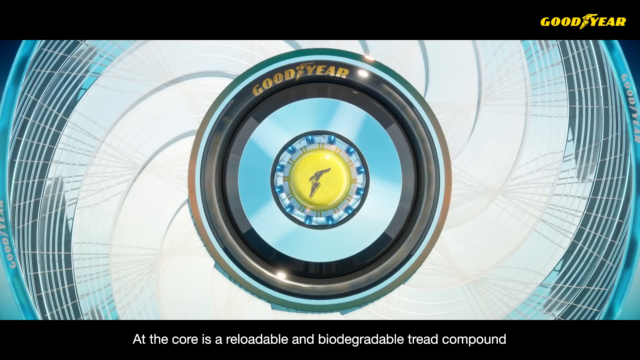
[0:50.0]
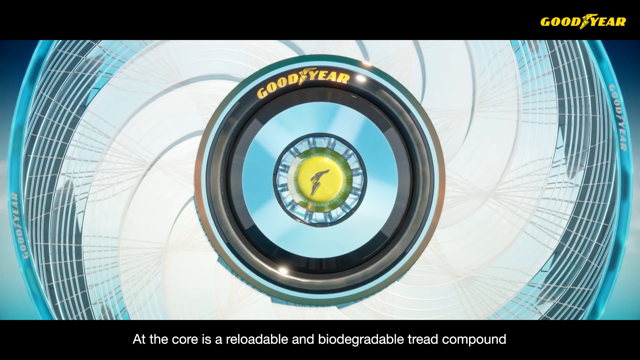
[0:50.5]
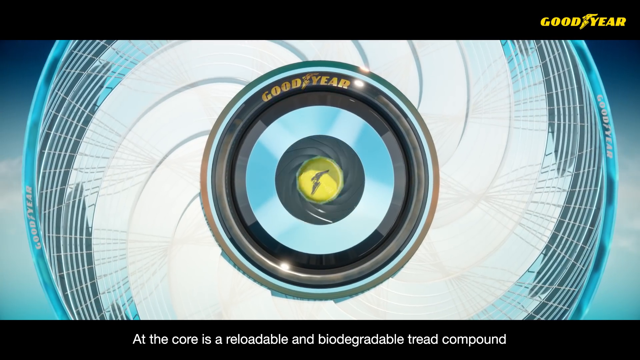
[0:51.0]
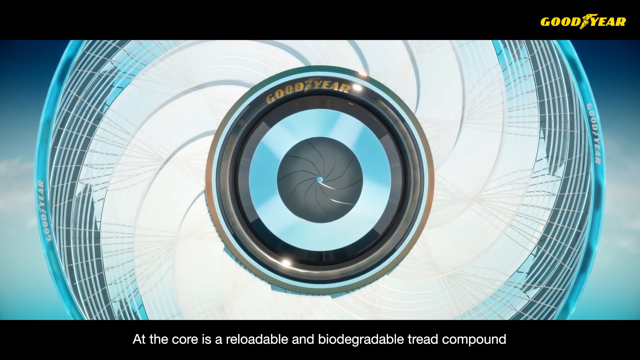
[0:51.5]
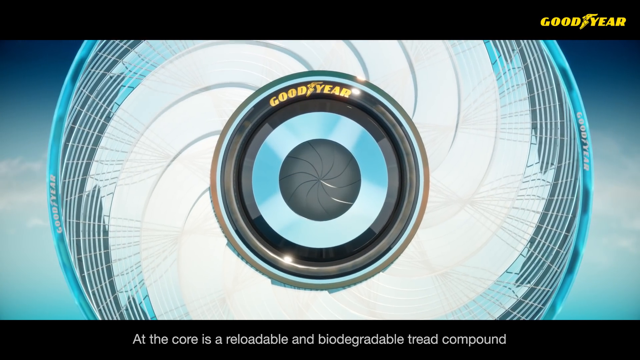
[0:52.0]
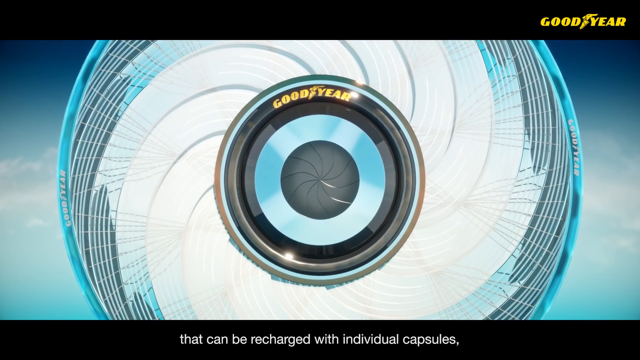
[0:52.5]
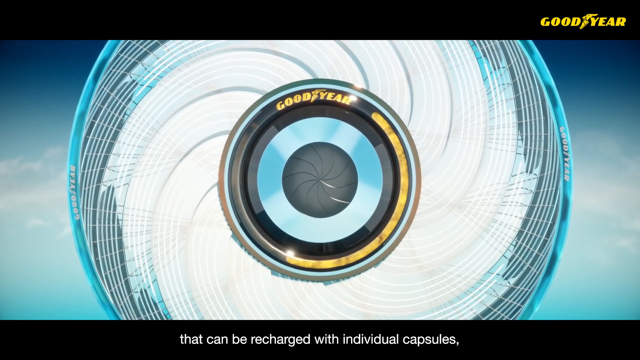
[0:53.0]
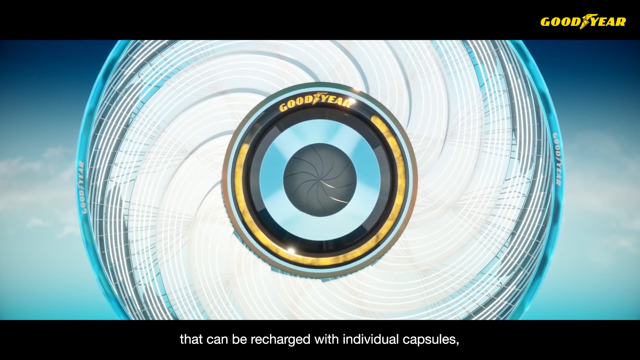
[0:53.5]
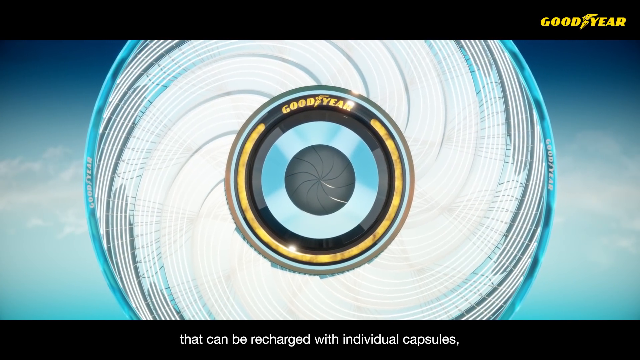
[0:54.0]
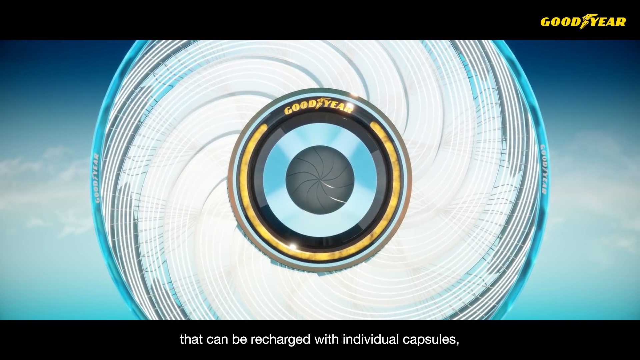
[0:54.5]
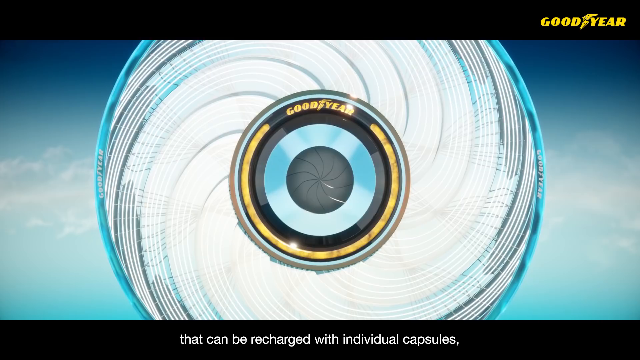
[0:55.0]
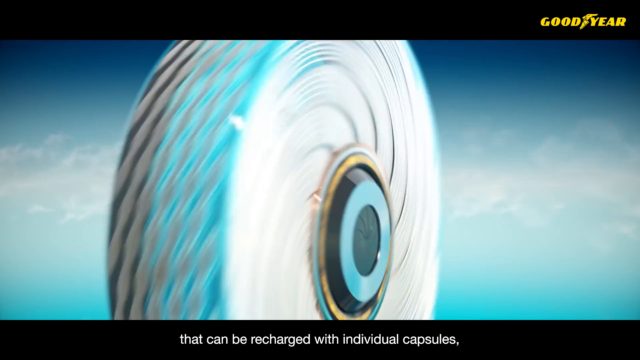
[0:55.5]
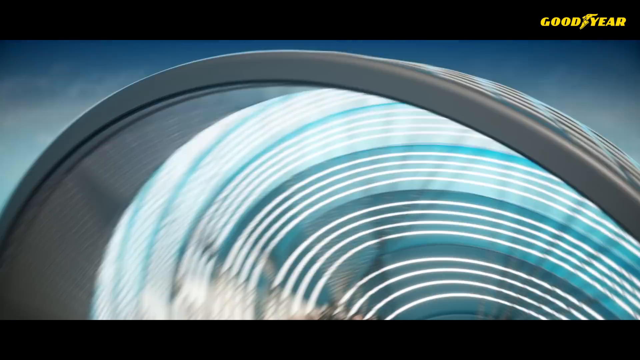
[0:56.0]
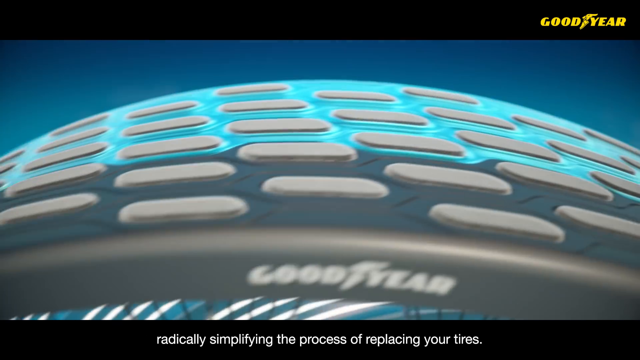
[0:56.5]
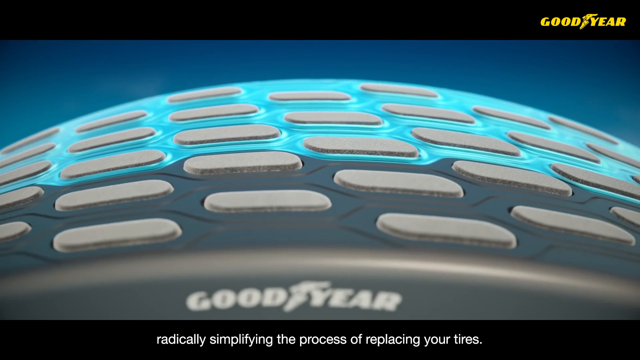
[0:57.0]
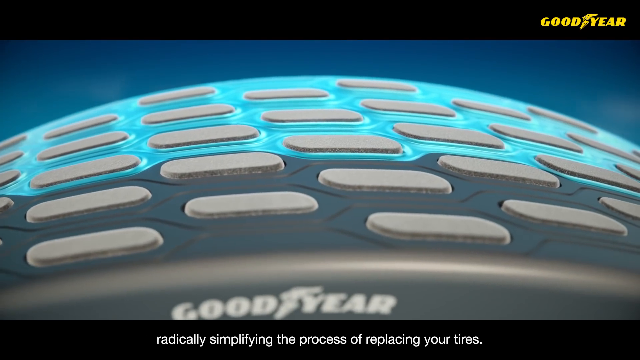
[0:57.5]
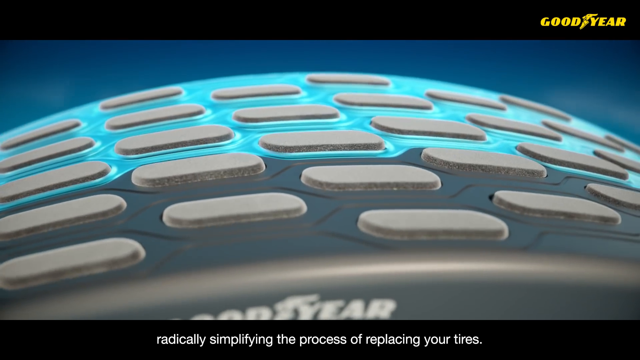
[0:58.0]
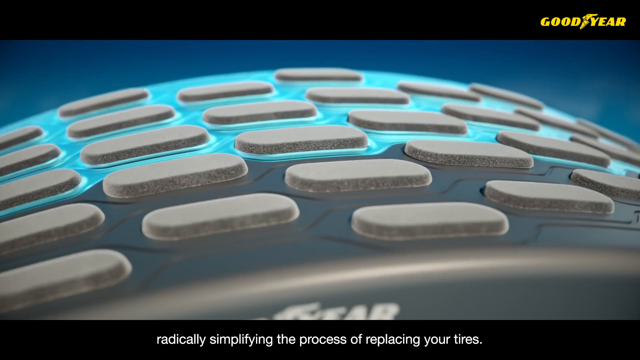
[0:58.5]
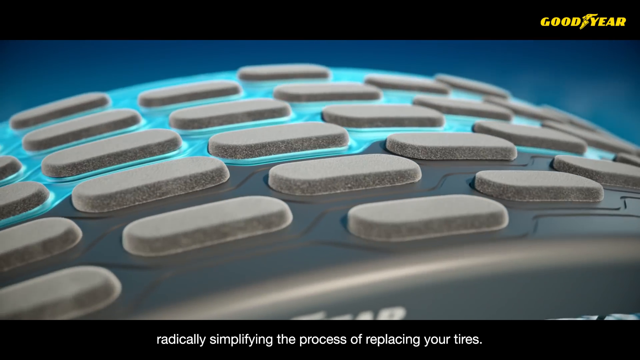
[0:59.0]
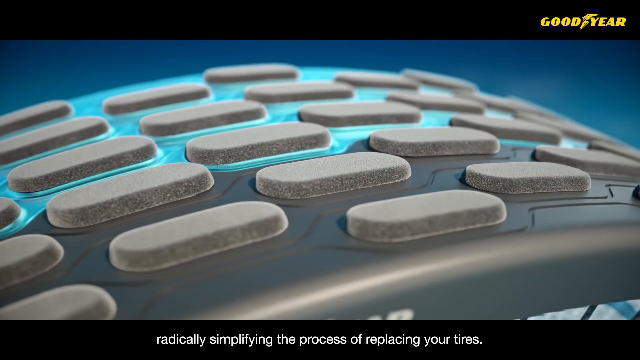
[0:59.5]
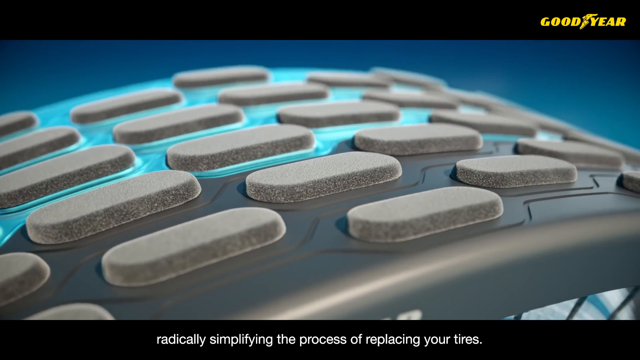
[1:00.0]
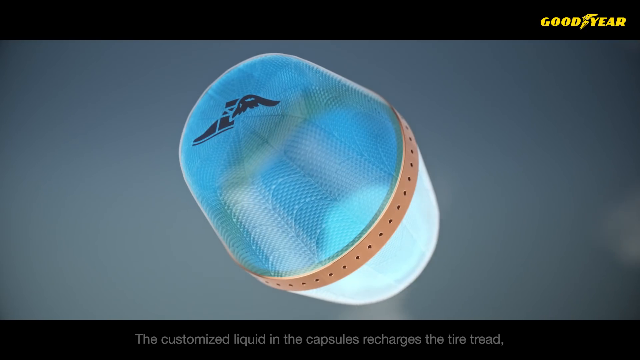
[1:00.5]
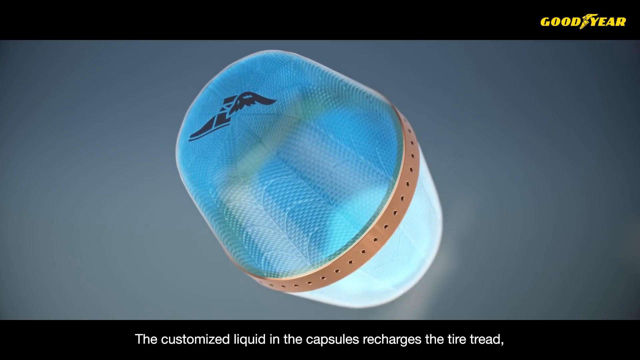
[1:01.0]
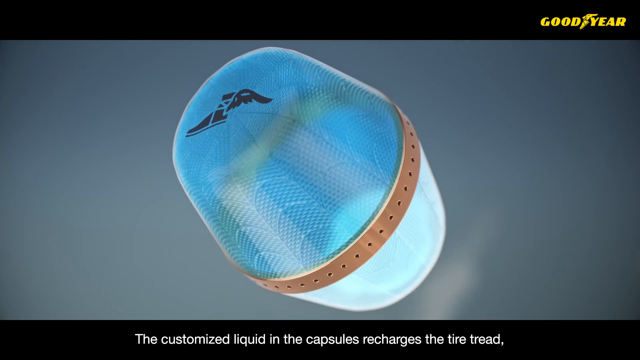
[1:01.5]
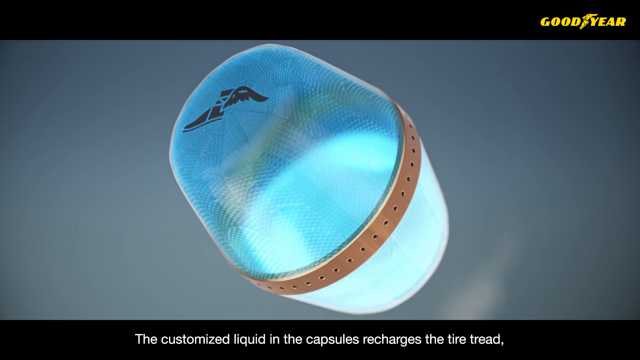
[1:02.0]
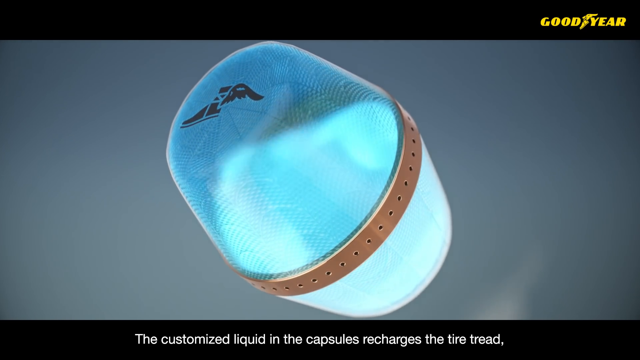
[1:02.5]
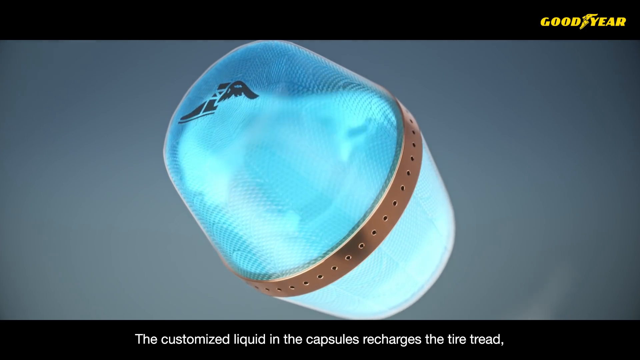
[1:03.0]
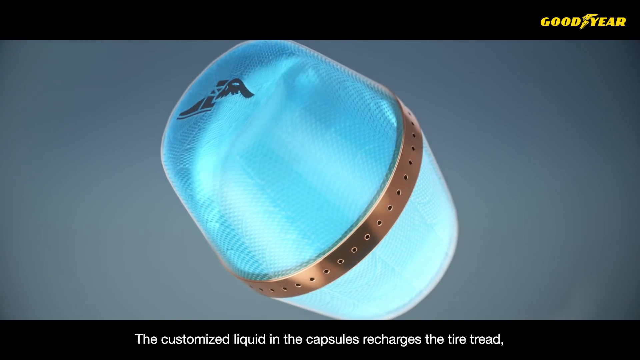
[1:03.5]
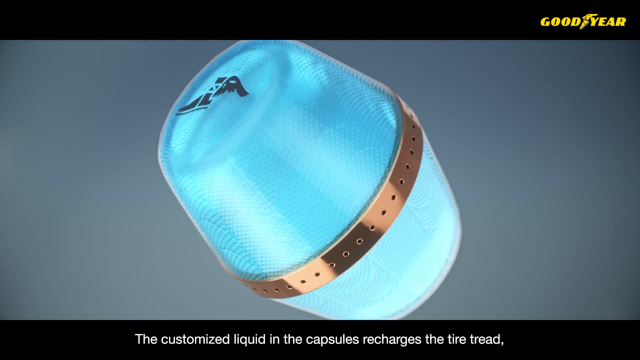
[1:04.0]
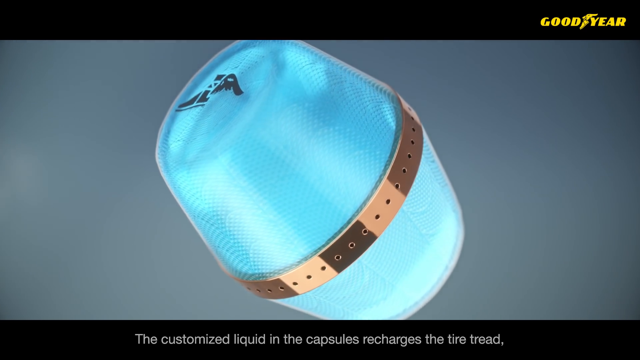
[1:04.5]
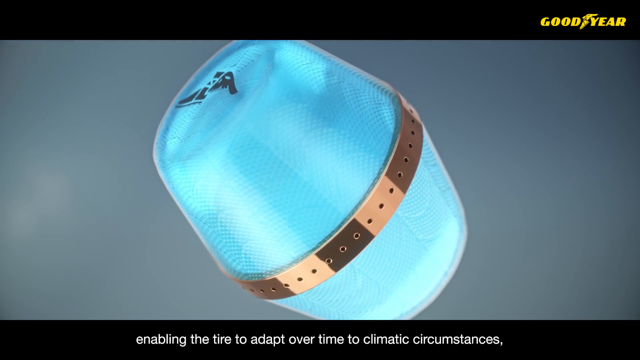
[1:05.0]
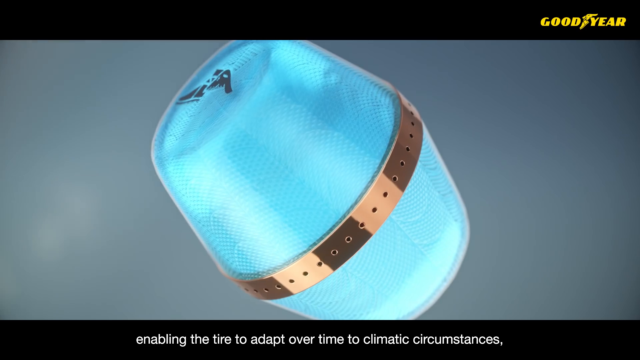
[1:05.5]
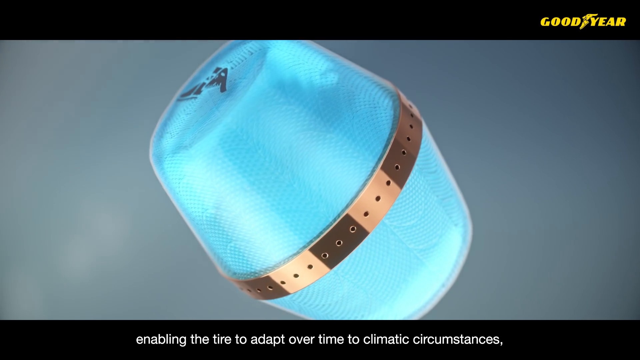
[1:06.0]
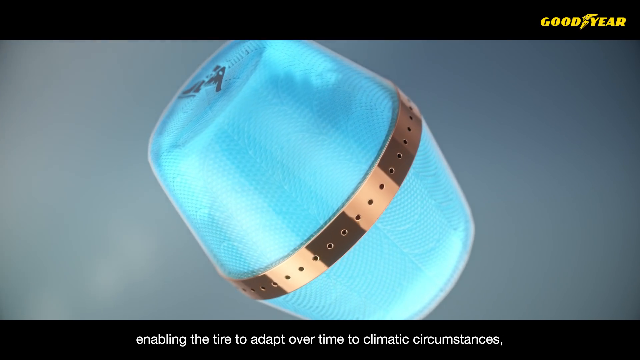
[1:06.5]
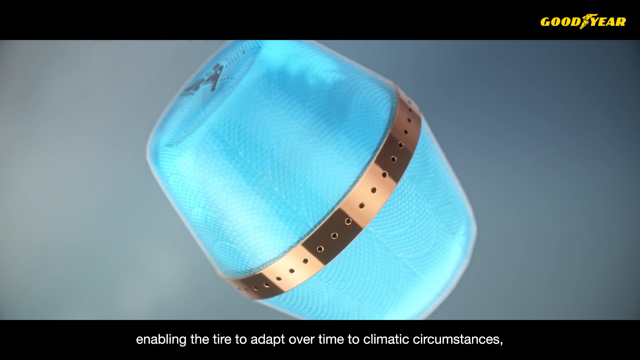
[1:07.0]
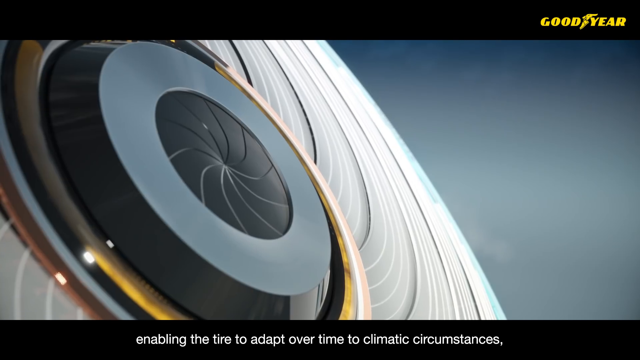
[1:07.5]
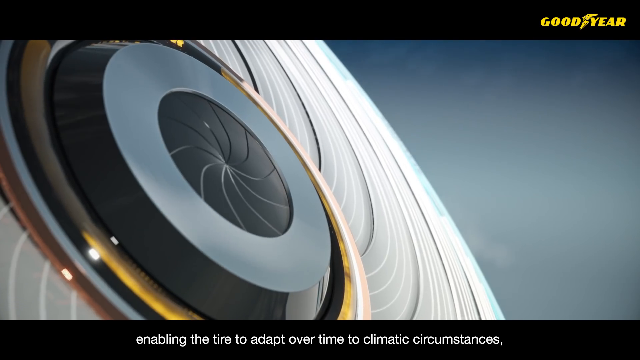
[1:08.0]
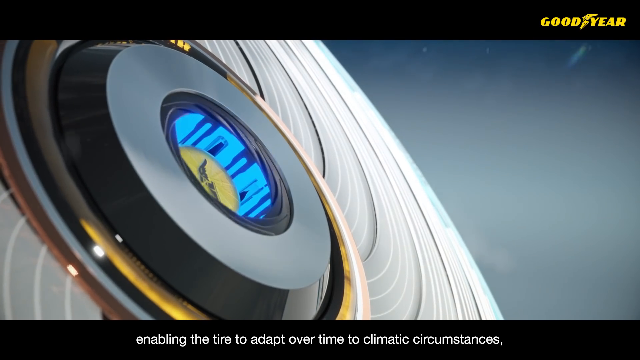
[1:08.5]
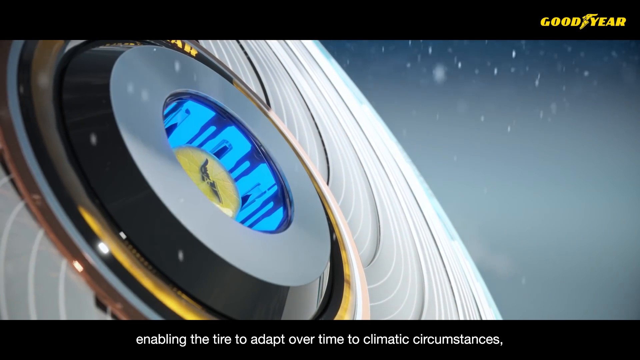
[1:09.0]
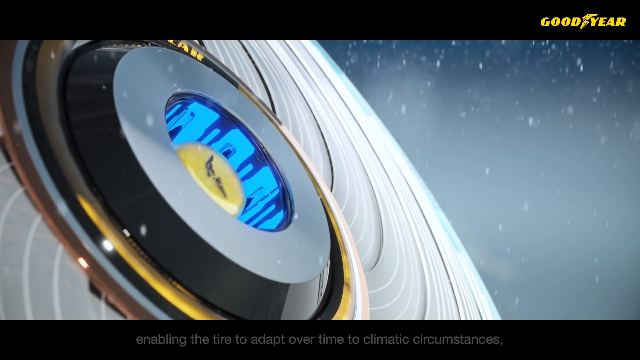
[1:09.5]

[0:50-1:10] The video focuses specifically on the yellow middle part of the tire, which it calls a capsule. There are close-up views of the tire's tread showing its small patterns, and then the shot returns to the capsule in the middle.